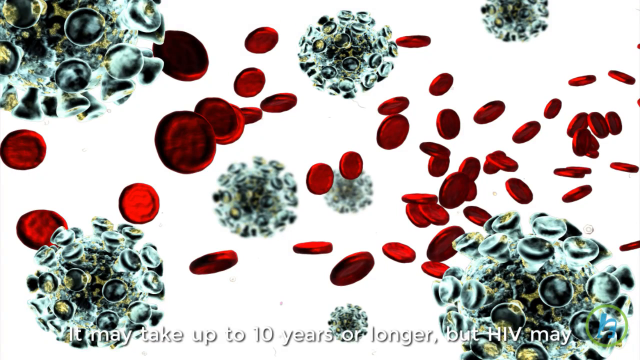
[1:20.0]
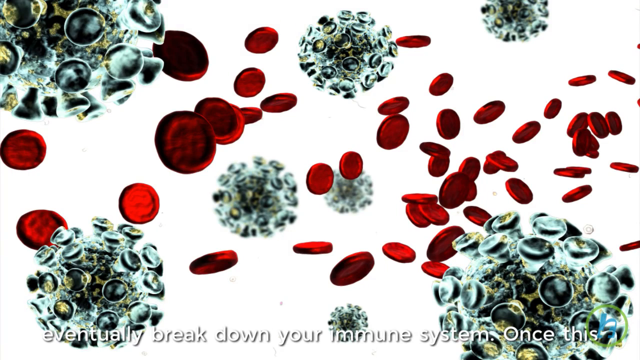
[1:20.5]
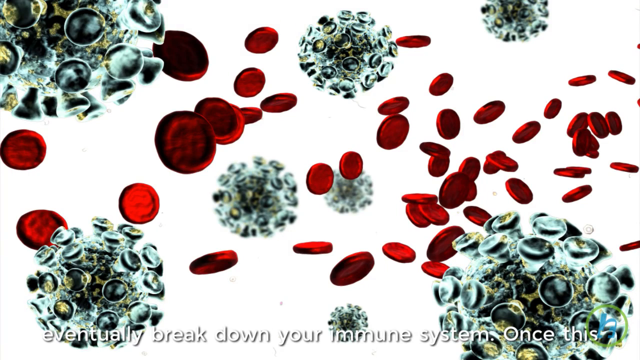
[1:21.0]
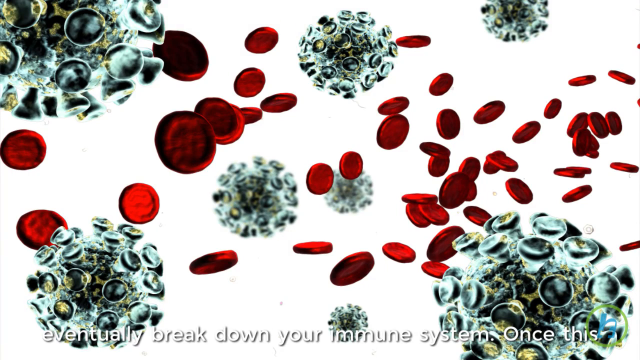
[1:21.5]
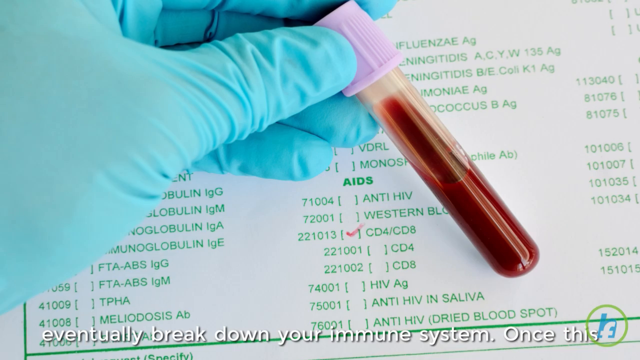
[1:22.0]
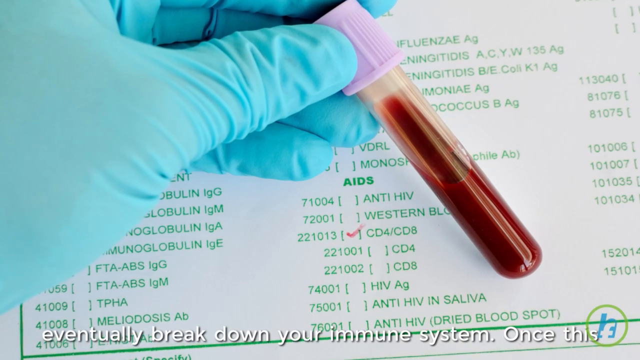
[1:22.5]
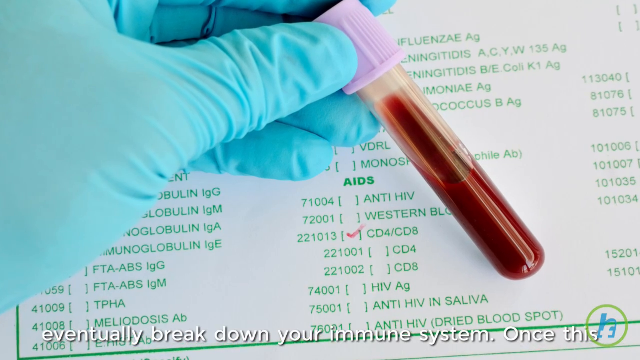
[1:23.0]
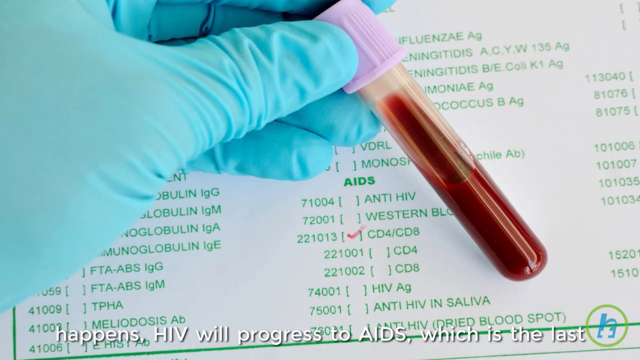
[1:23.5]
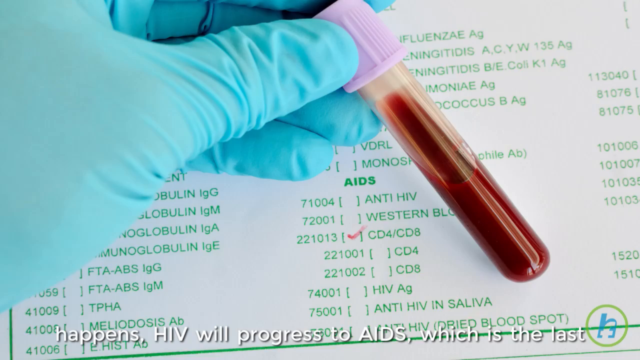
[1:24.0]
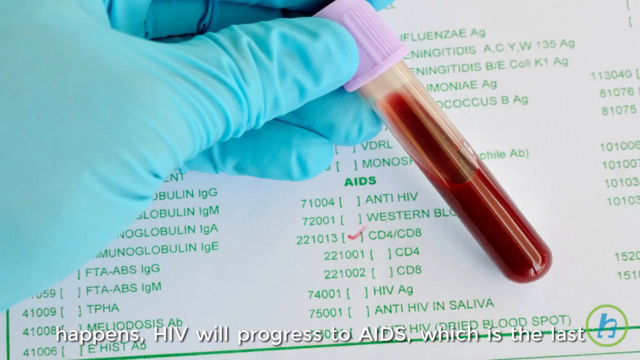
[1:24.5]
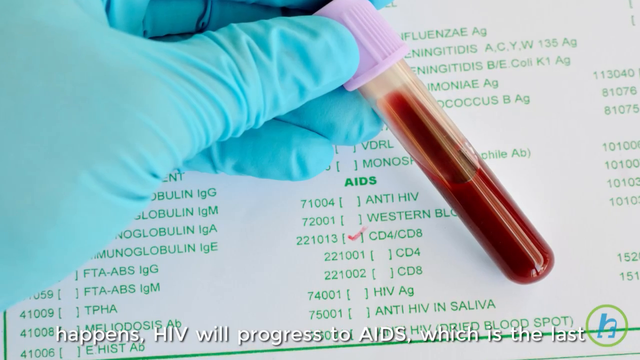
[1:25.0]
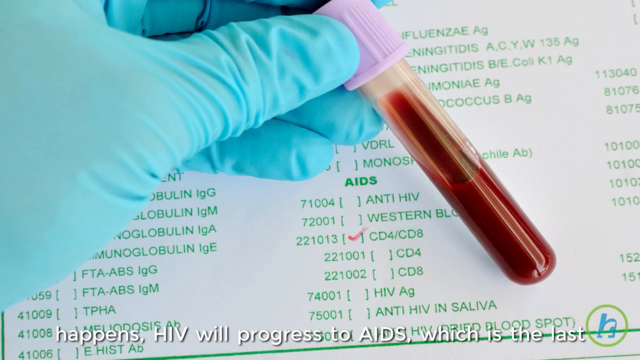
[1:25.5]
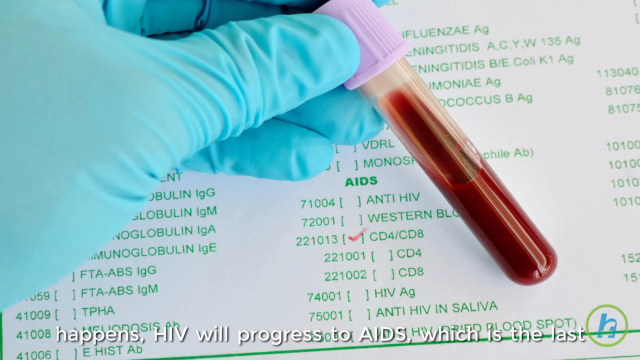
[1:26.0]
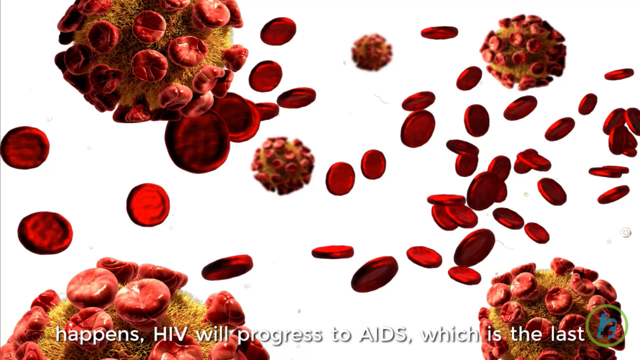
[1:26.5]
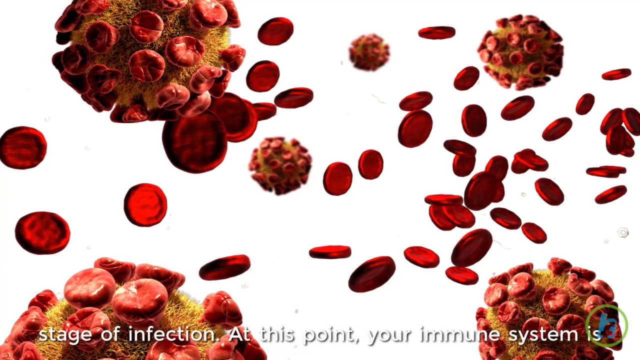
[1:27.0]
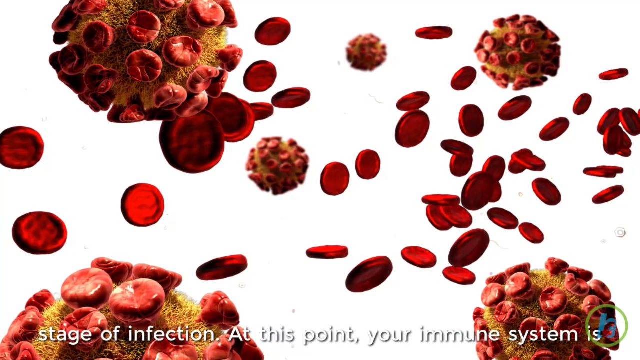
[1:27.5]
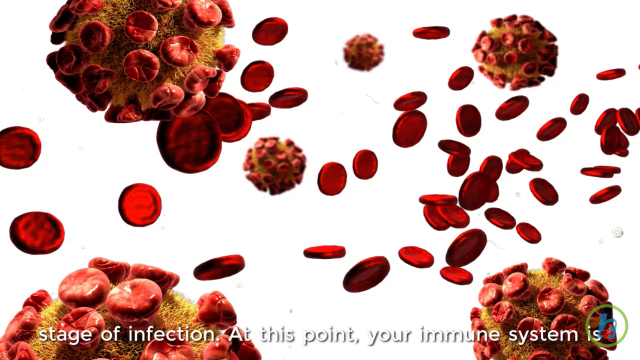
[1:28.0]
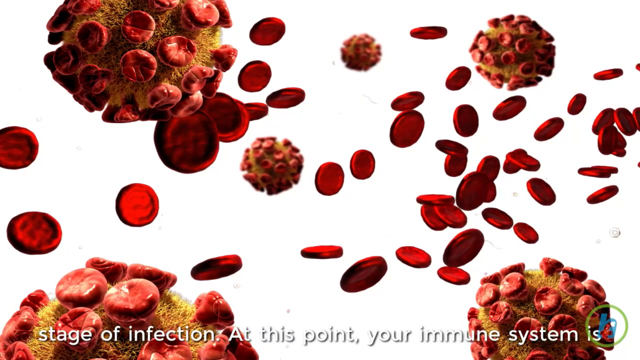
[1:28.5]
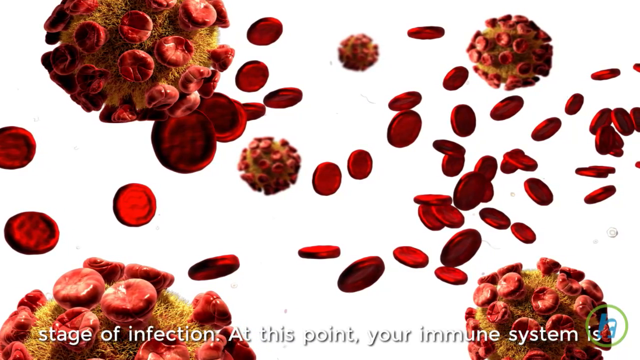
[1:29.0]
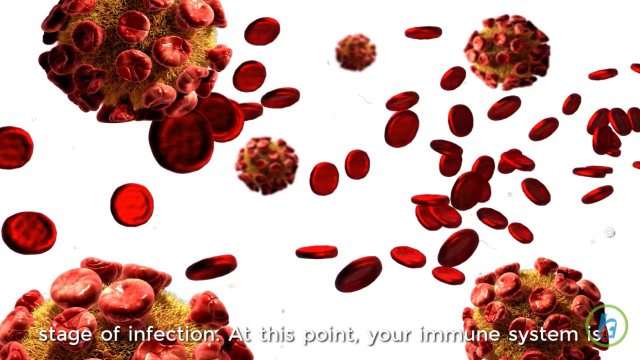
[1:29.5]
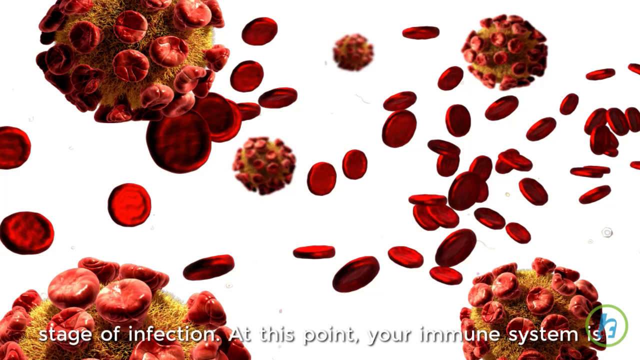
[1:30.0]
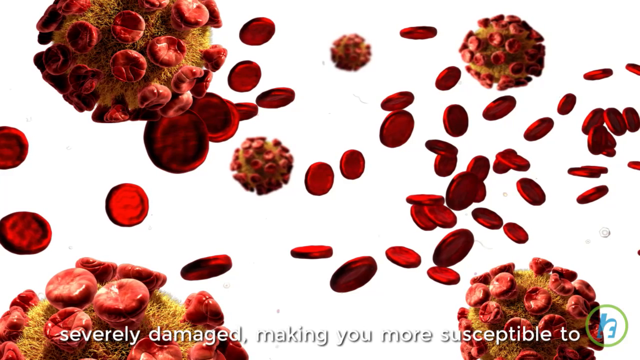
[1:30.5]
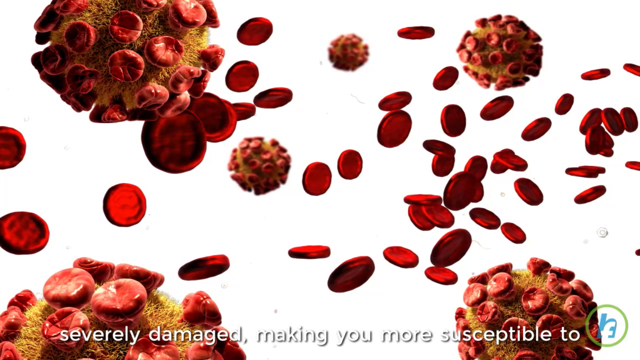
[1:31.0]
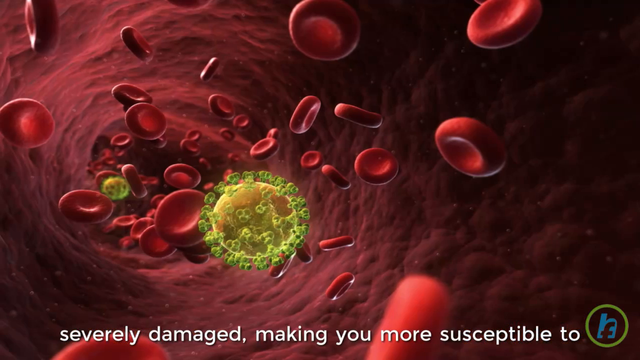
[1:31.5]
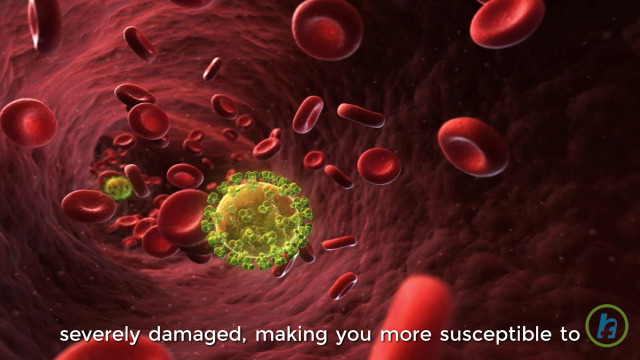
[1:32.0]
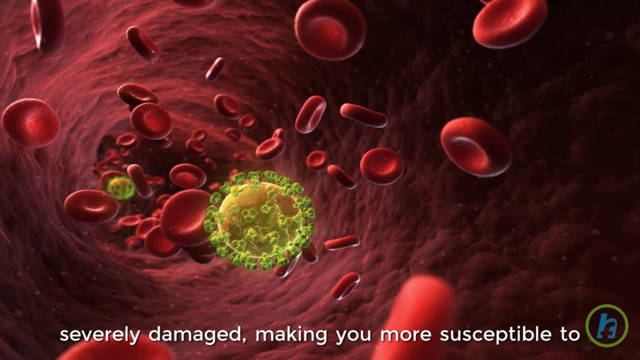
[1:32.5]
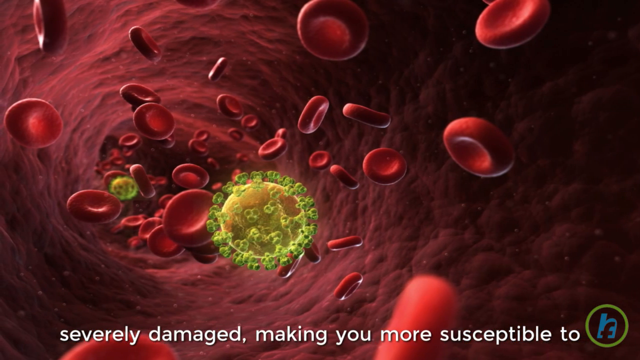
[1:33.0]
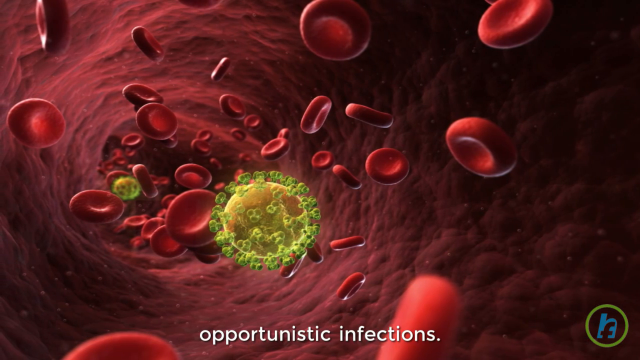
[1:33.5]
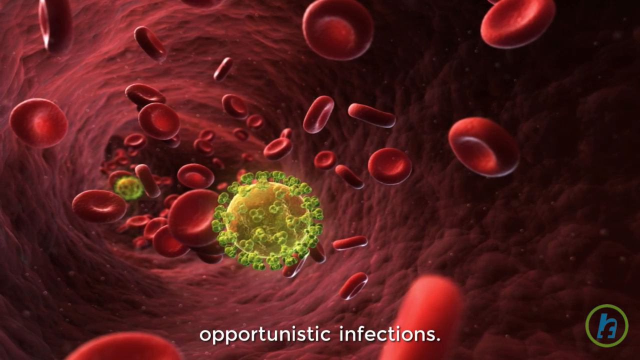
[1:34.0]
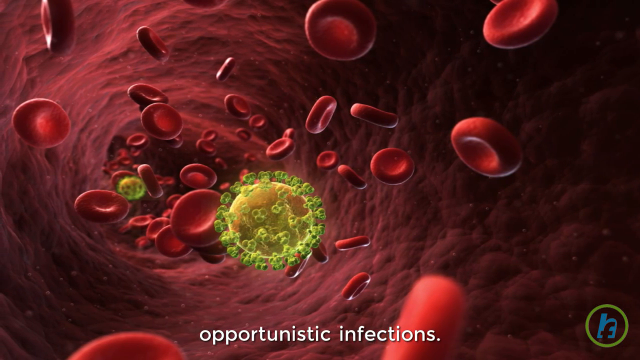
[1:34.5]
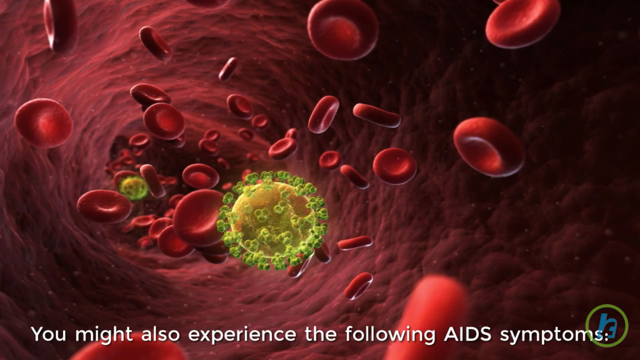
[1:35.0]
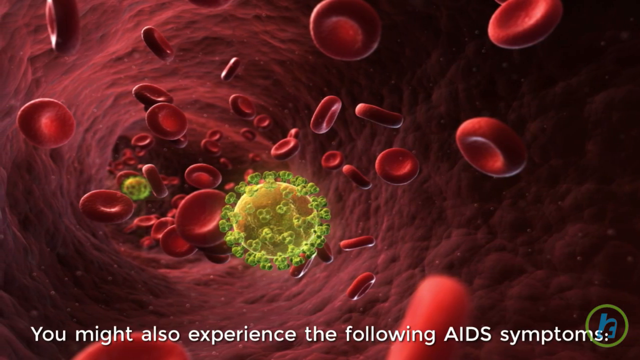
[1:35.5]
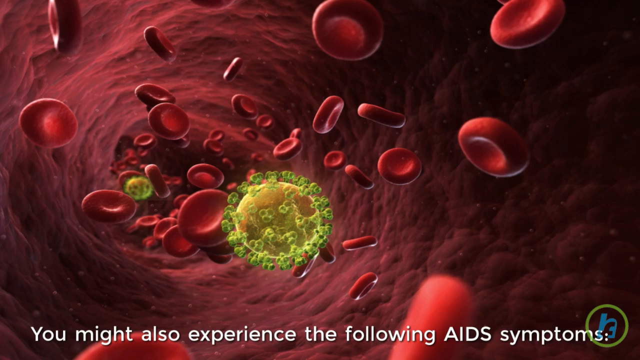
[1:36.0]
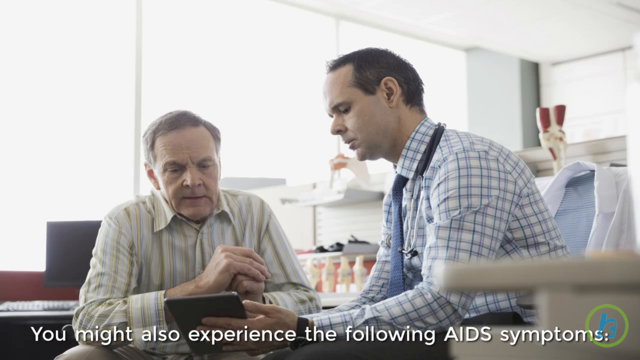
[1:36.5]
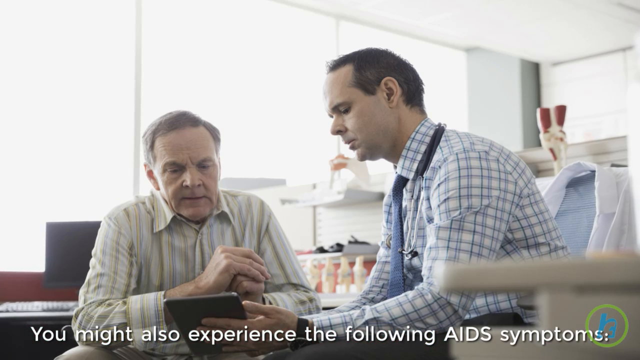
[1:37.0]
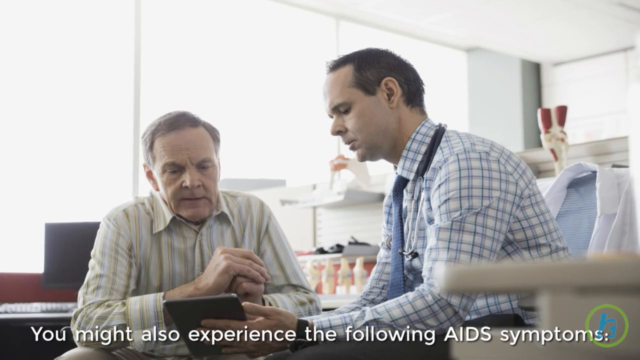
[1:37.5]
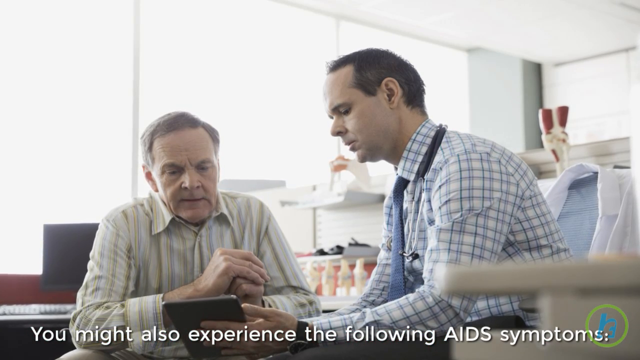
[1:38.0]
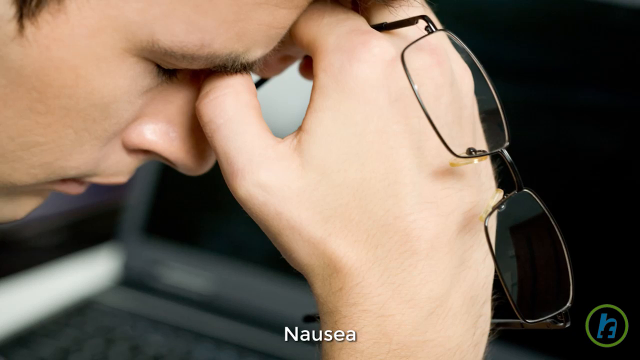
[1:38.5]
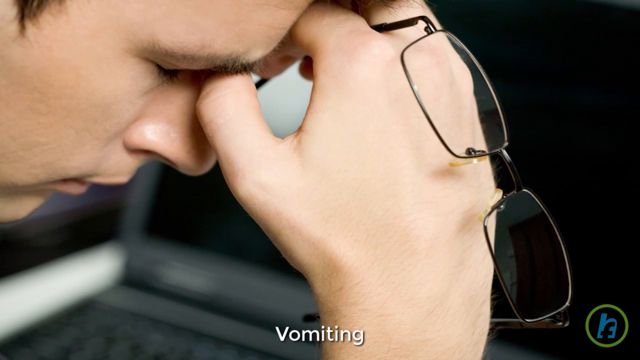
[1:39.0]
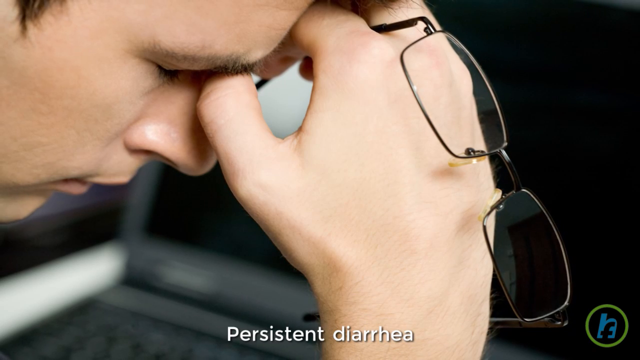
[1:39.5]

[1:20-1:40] A still computerized image shows what are probably meant to represent human cells on a microscopic level. There are red, flat, disc-shaped cells, likely representing red blood cells, and more rounded, spiky, white circular cells, all kind of existing together in the image with no movement. Next is a still photo of a human hand in a blue glove, fingers together, holding a vial that appears to be clear plastic with a purple lid and has red blood in it. The image is zoomed in on for a few seconds. Then another computerized rendition appears, which looks like just red blood cells: many little flat red discs, plus circular ones that are red rather than white. All of the cells in this image are red.